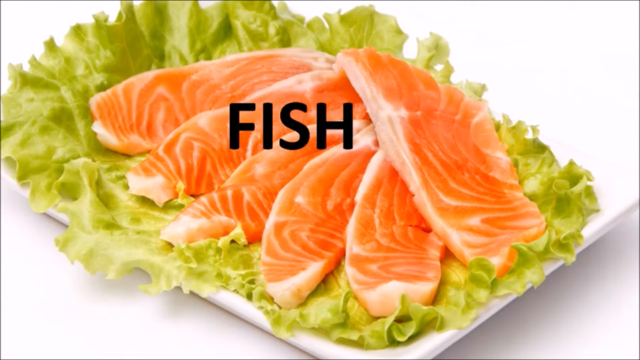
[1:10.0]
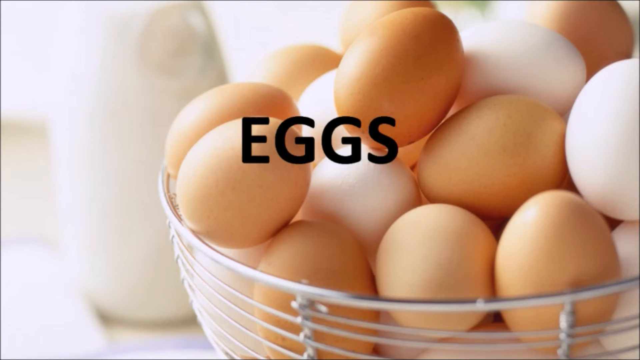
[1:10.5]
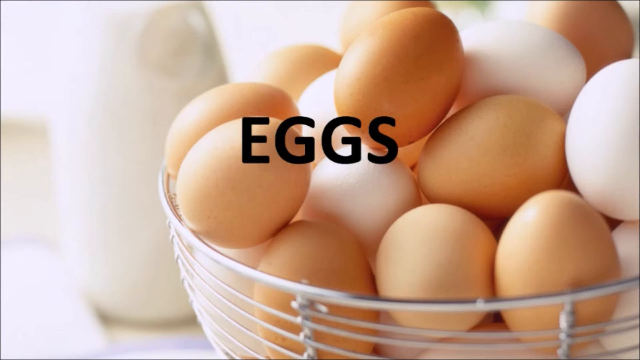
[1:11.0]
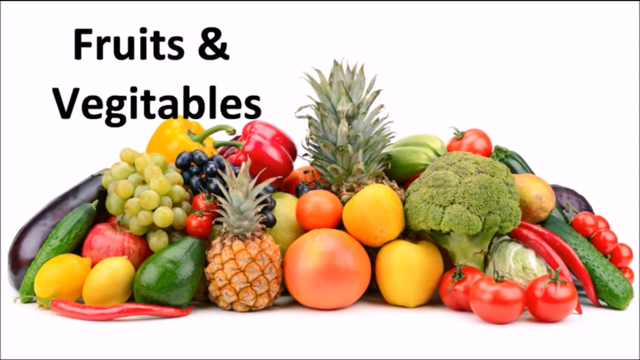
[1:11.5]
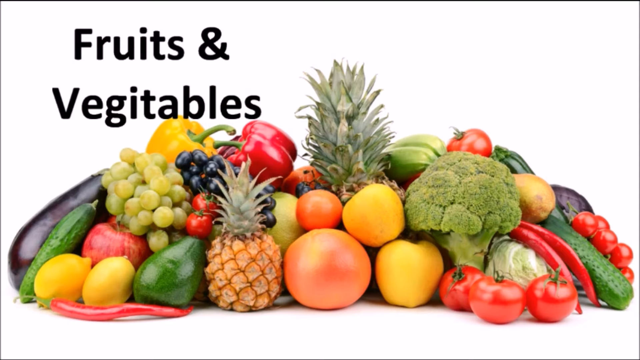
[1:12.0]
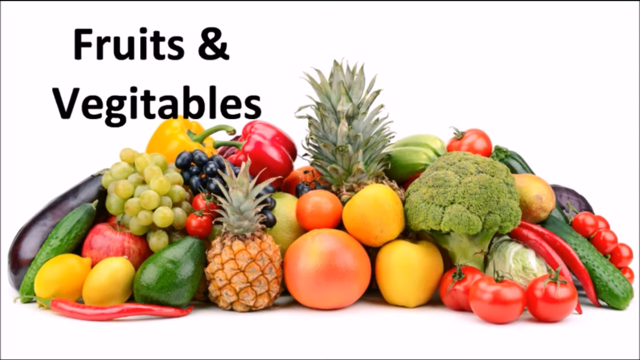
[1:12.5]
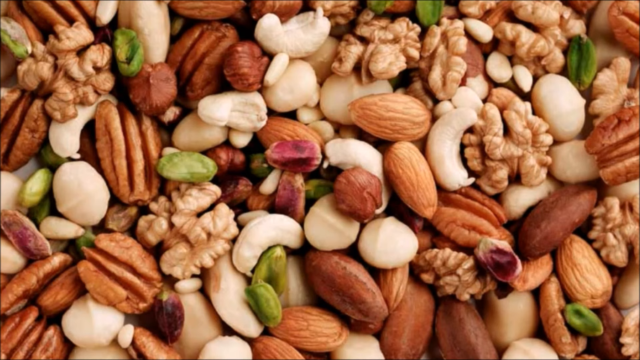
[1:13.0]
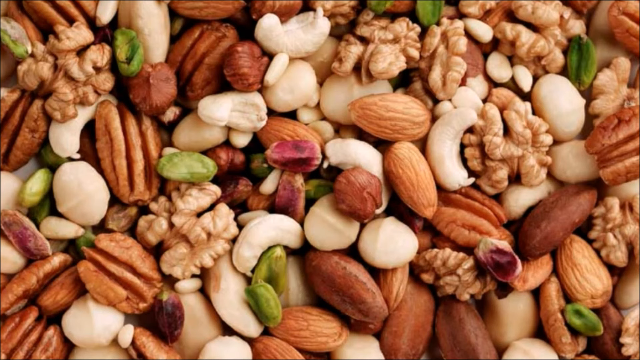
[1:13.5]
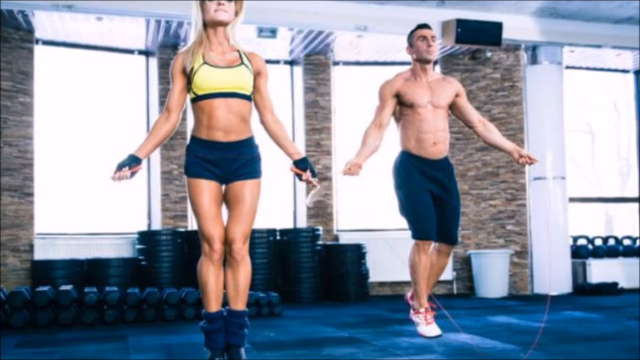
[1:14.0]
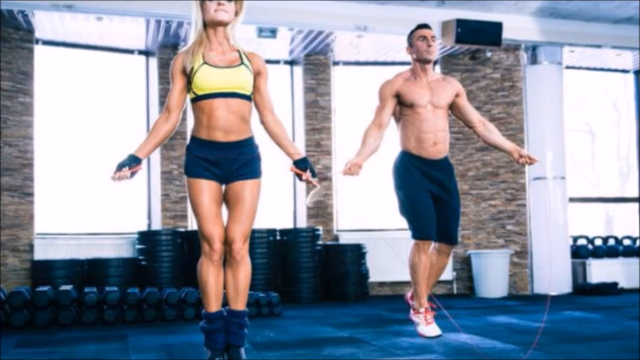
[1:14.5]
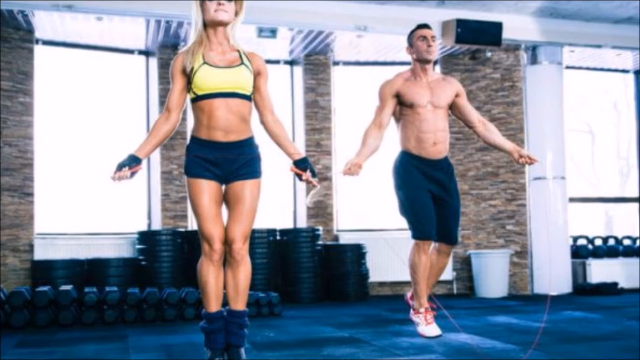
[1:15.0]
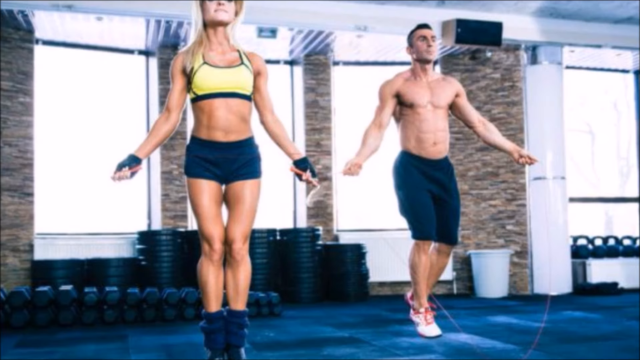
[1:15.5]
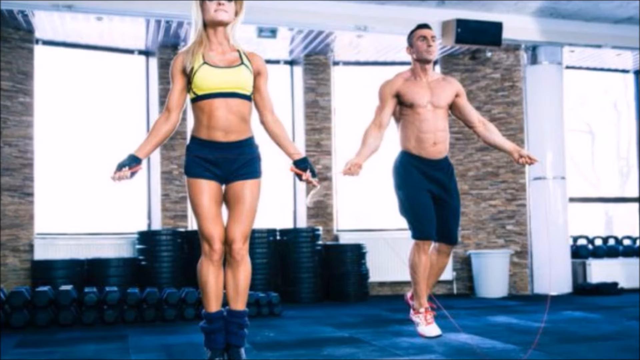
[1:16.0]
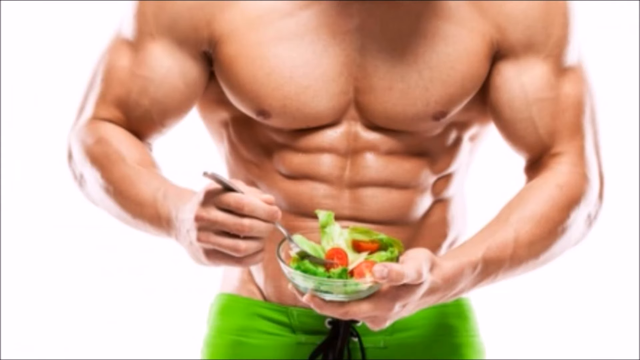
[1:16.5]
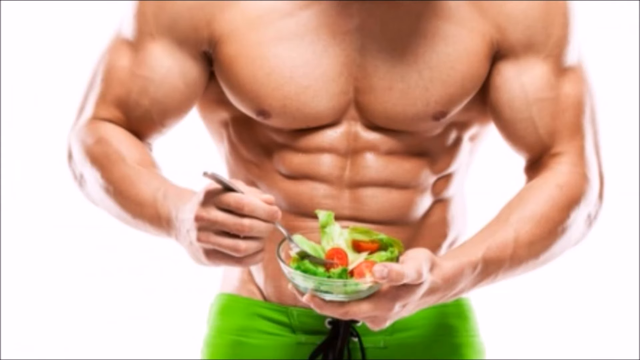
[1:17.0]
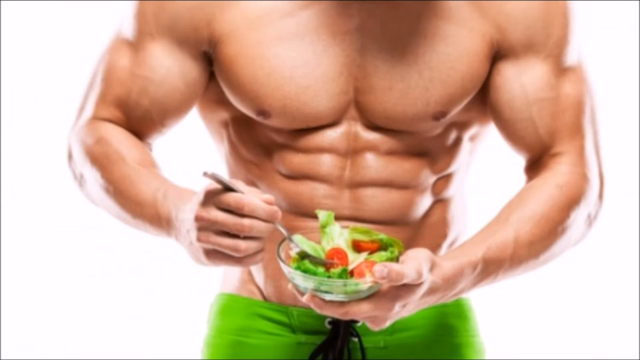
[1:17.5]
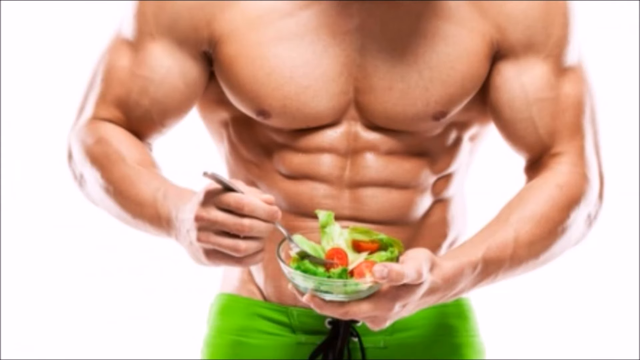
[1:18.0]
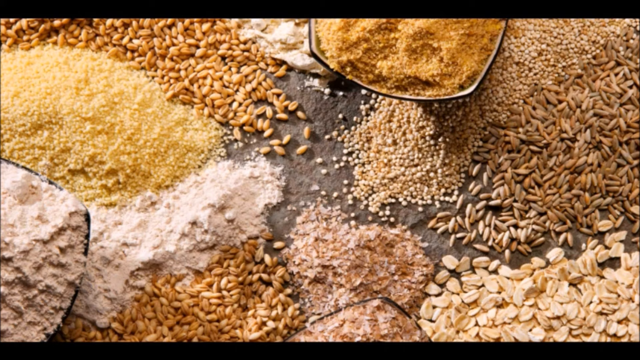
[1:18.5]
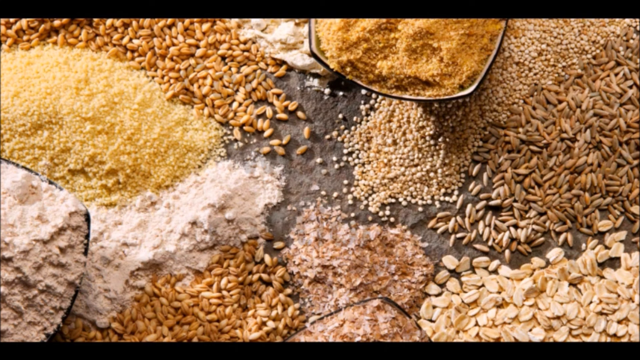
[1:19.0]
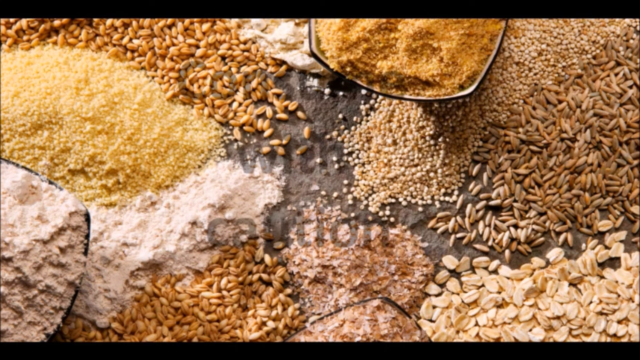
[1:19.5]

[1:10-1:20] A bunch of brown and white eggs appear to be in a bowl made of thin strips of metal, with the word "eggs" over them in black font. The image switches to a pile of fruit and vegetables with "fruit and vegetables" written in black on the left; tomatoes, cucumbers, broccoli, pineapple, avocado, grapes, a lemon and zucchini are visible, along with other unidentified items. Next is a little pile of nuts, including walnuts, almonds, pistachios and pepitos. Then a man and a woman in workout gear in a gym appear to both be jump roping. The video goes back to the really ripped male eating a salad, and then apparently shows an image of a pile of different types of grains.